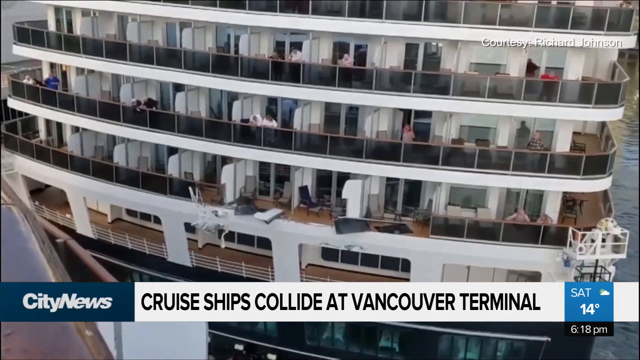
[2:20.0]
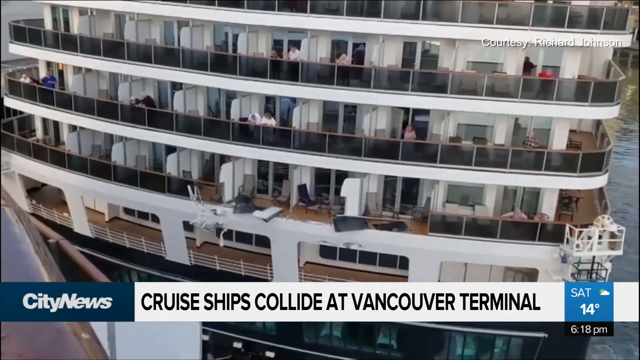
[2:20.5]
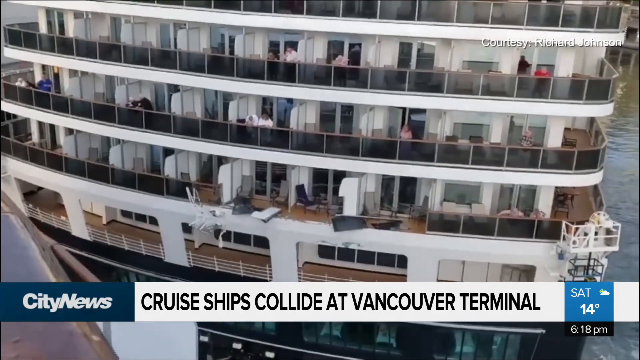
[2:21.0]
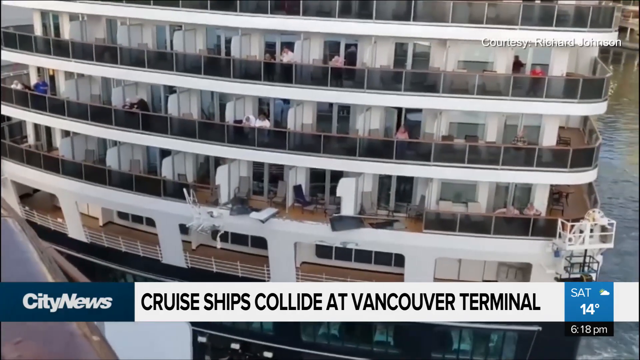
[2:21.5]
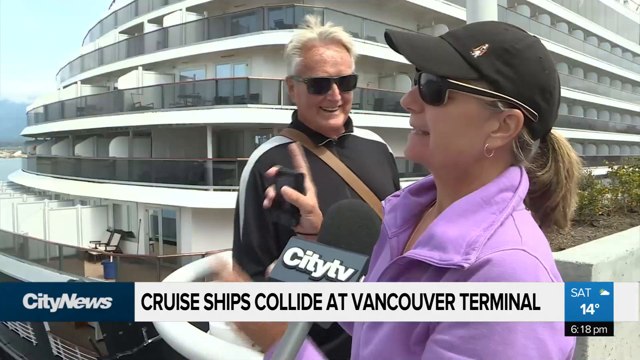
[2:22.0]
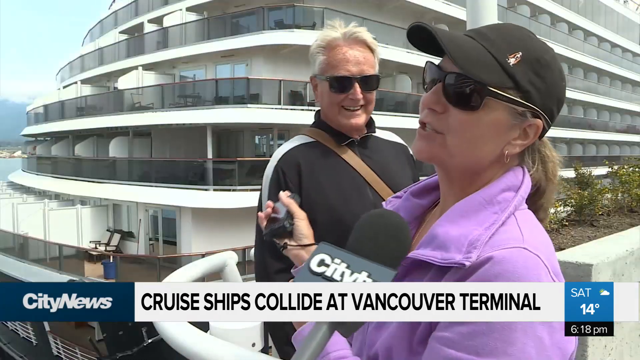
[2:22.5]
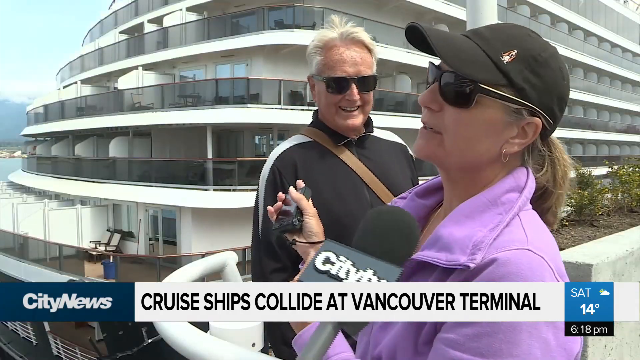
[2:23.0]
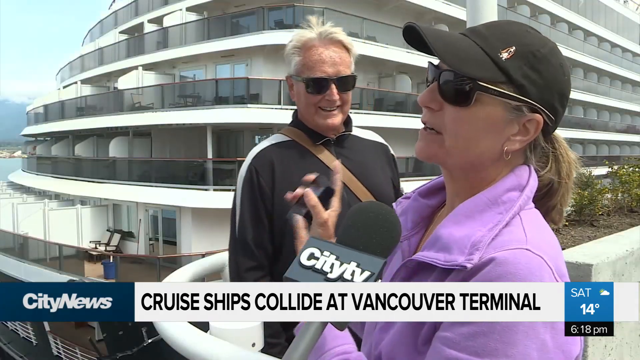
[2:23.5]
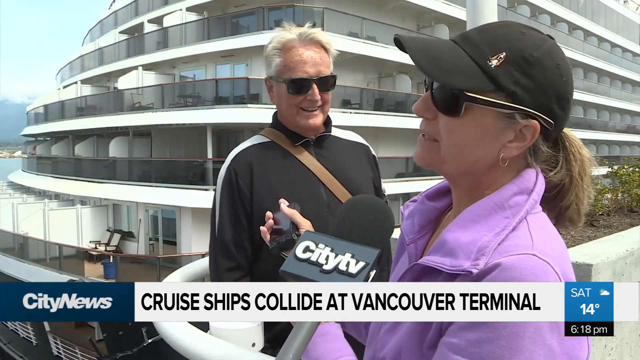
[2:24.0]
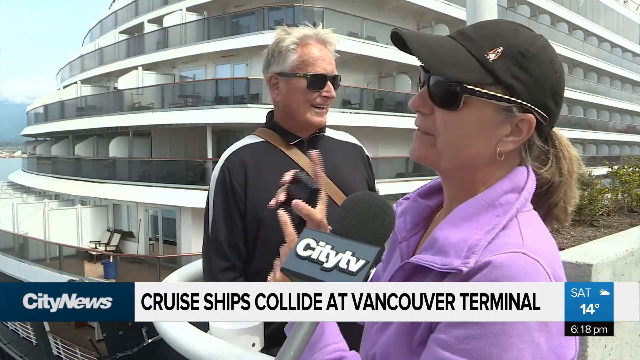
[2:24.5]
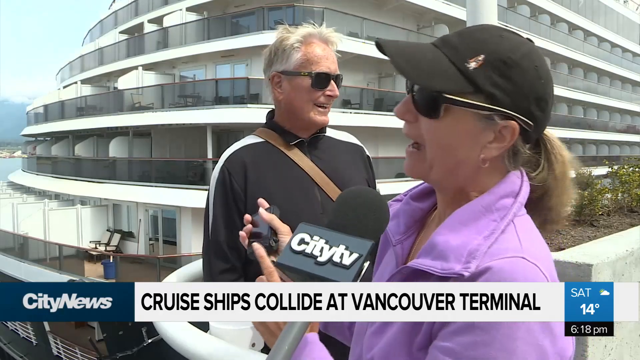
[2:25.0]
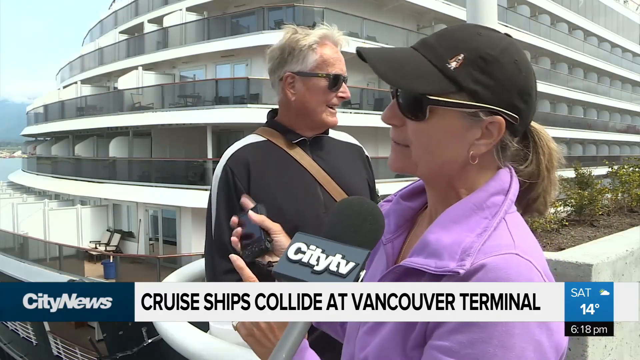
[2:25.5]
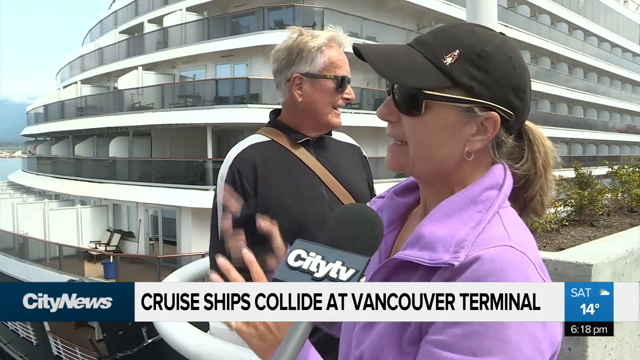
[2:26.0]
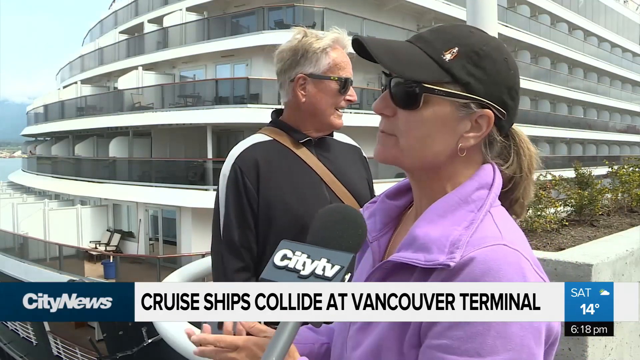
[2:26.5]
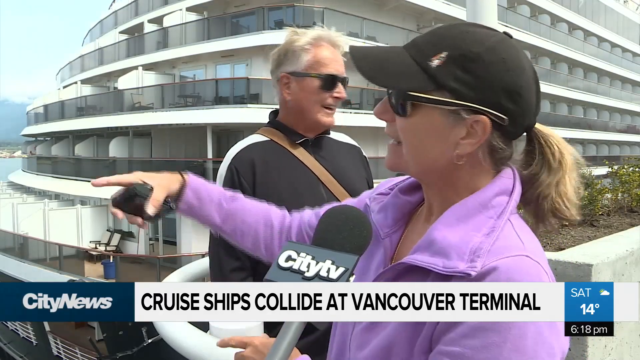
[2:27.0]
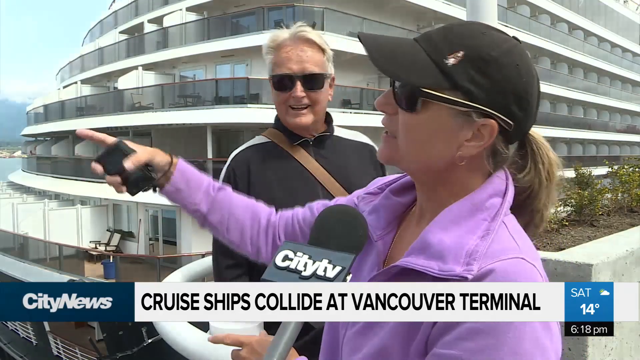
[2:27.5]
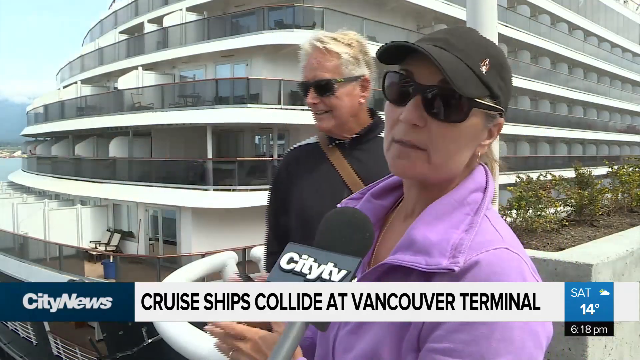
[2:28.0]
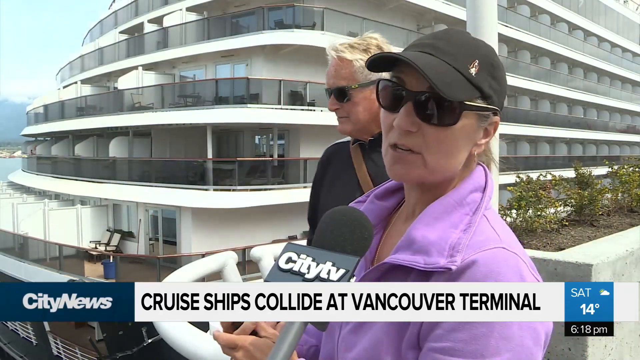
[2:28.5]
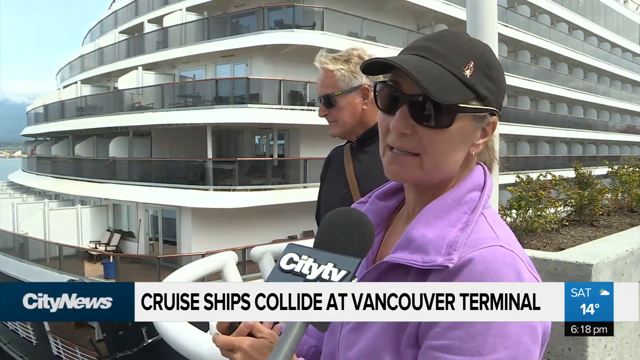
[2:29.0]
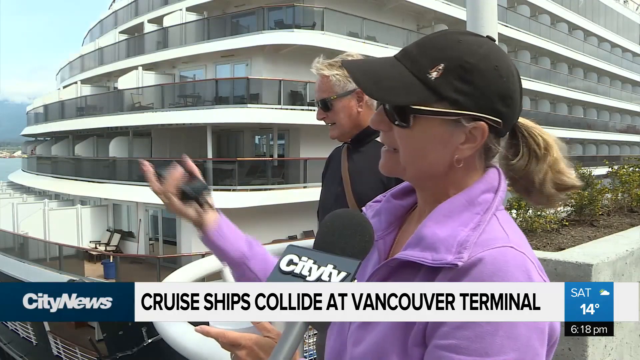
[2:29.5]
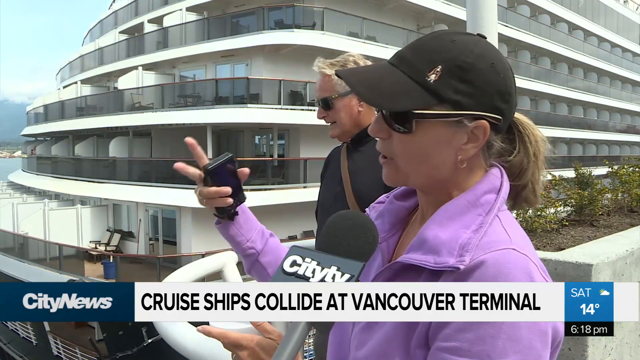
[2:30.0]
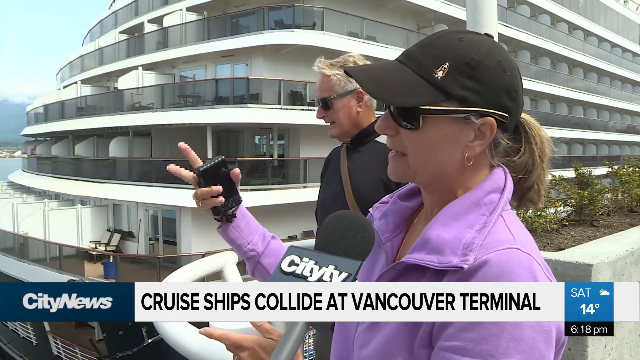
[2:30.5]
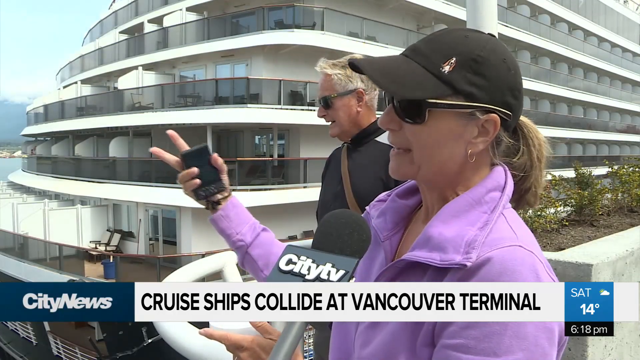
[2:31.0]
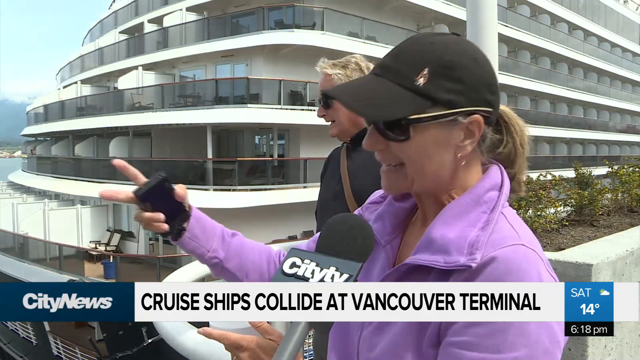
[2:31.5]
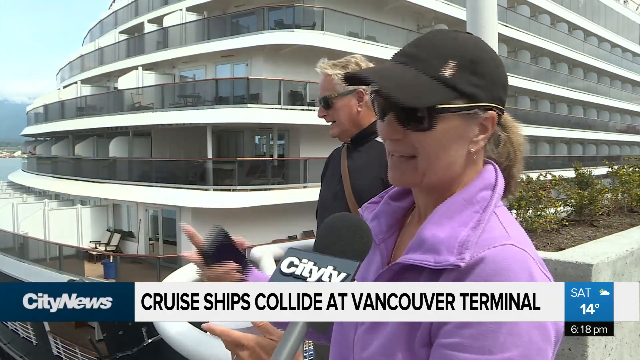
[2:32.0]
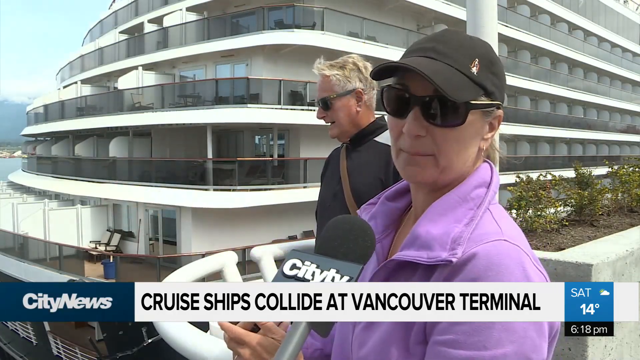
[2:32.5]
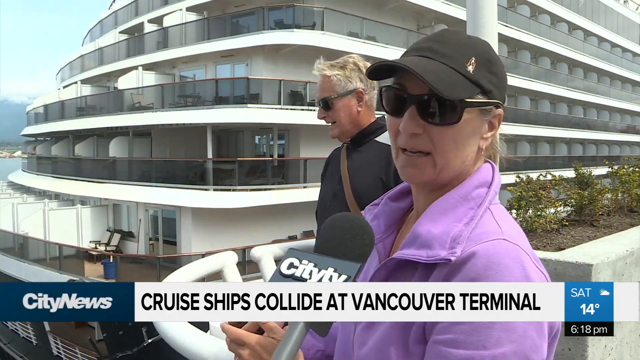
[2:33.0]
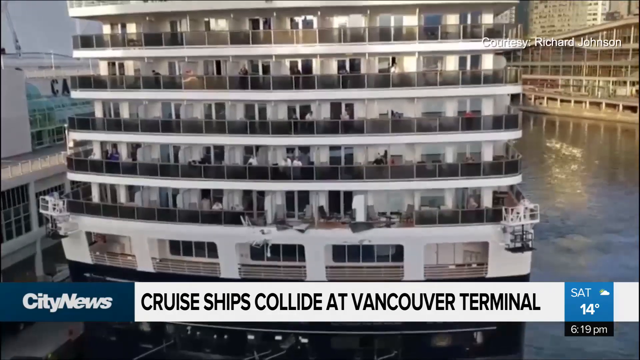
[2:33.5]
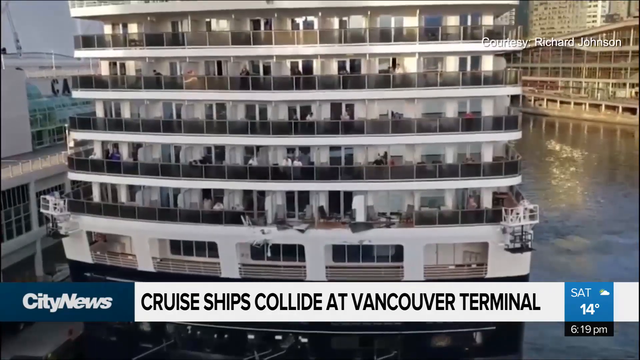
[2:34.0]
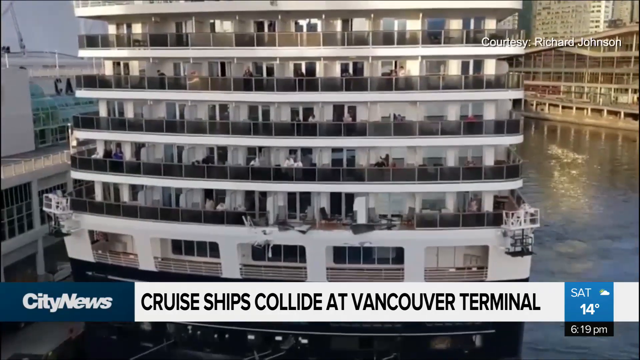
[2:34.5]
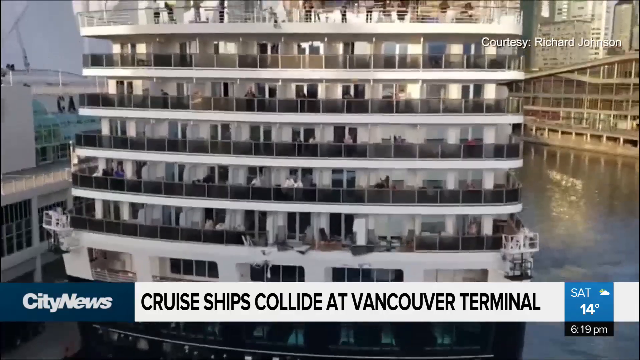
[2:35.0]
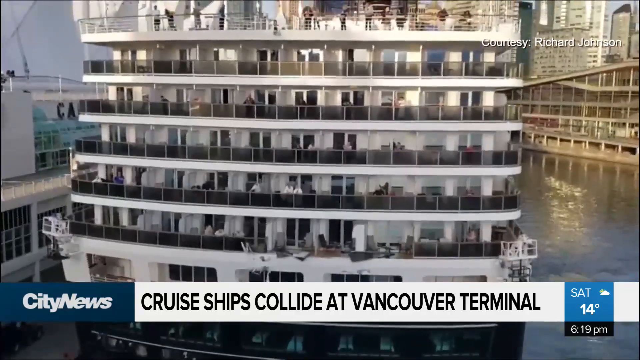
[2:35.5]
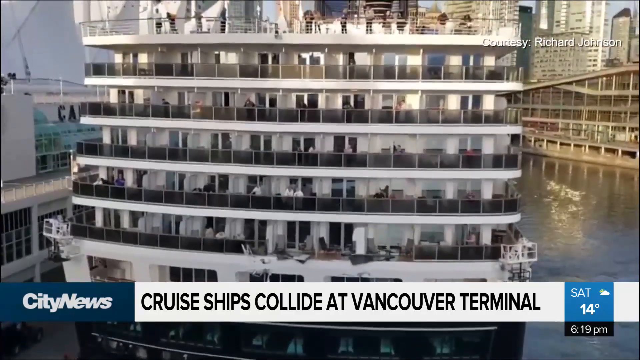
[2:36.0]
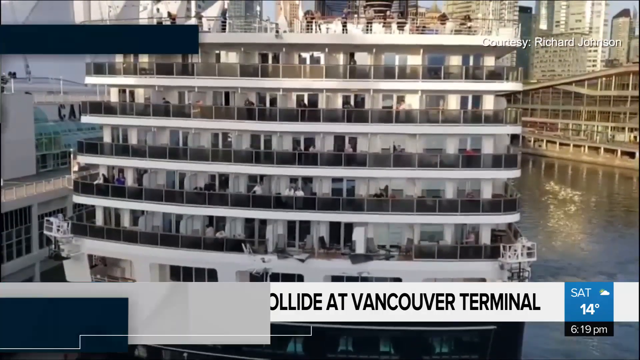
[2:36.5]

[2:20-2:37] A shot shows one of the two cruise ships drifting away. This ship has four levels with observational rails and guests on board, and appears to be the most damaged: some of the observational rails on the lowest level have been broken away, though the boat and the people on board are not in any danger. The banner beneath reads "Cruise Ships Collide at Vancouver Terminal". After three seconds, the video cuts back to the first couple that had been interviewed. The woman, who does all the talking, wears a black baseball cap, sunglasses and a pink jacket, has a ponytail, and is in her early 50s. She laughs as she describes what she saw to the reporter and points off camera. Her husband, in dark sunglasses and a black tracksuit with grayish hair, listens and smiles; what they describe seems to amuse them. The banner reads "Cruise Ships Collide at Vancouver Terminal". The last image shows the back of the cruise ship, five stories high with observational decks on all floors, damaged on its lowest level and drifting back towards the docks of Vancouver Bay. It is mid-afternoon, the sun is very bright, and the water is very calm.